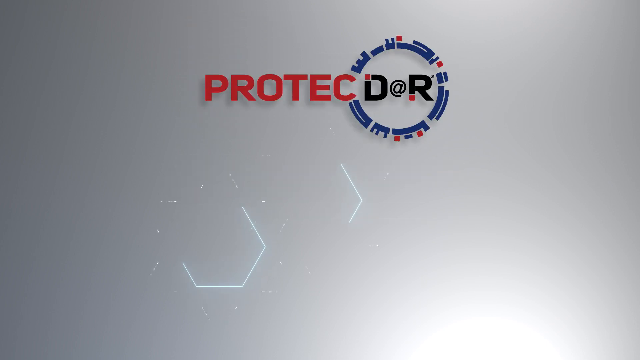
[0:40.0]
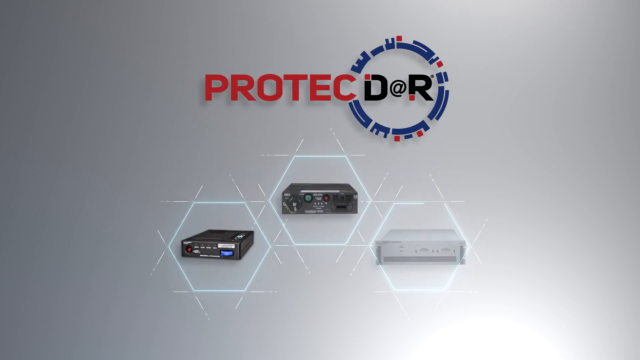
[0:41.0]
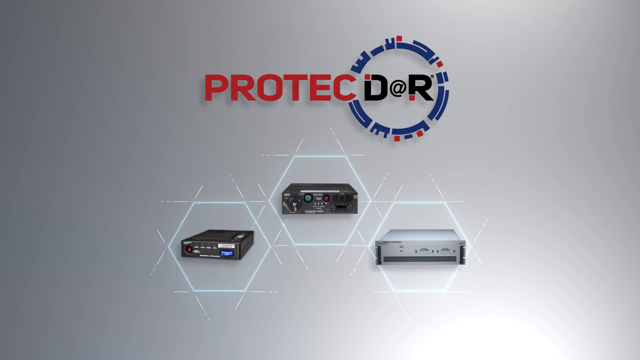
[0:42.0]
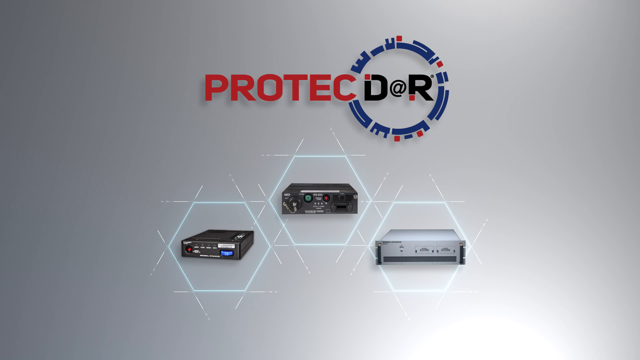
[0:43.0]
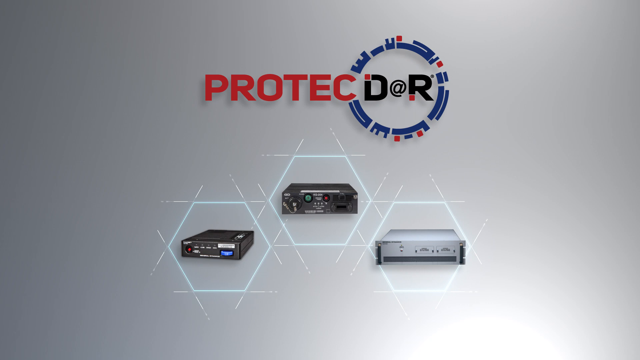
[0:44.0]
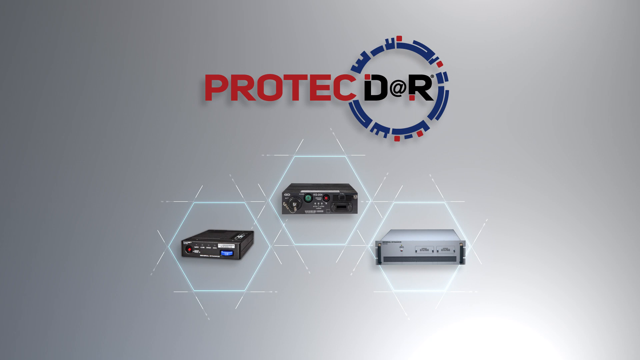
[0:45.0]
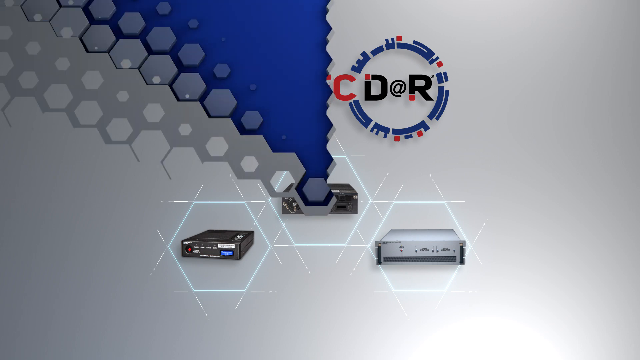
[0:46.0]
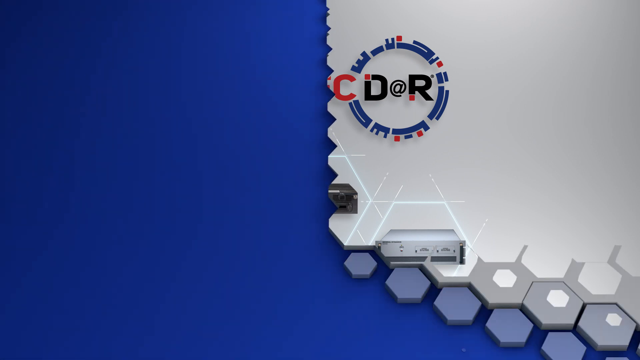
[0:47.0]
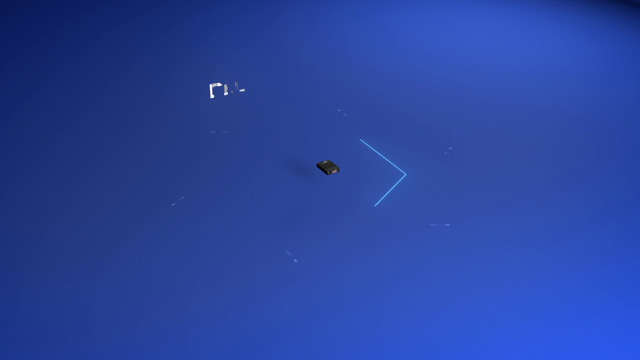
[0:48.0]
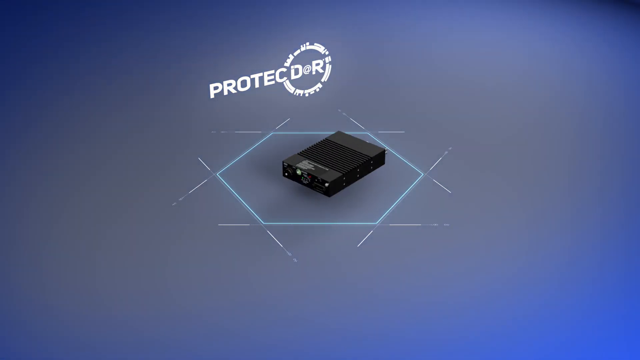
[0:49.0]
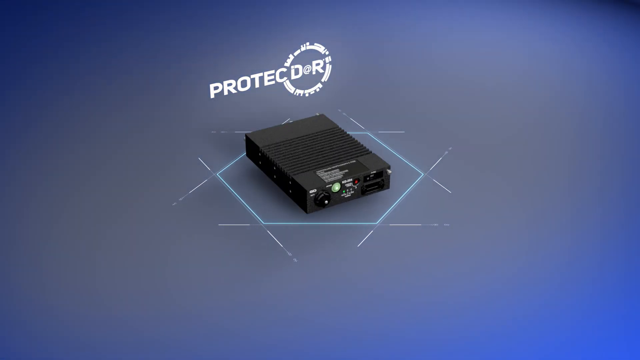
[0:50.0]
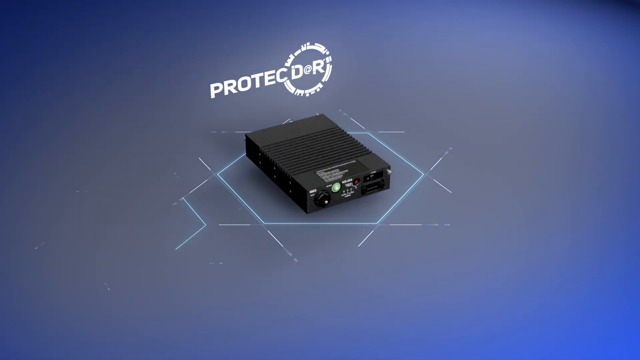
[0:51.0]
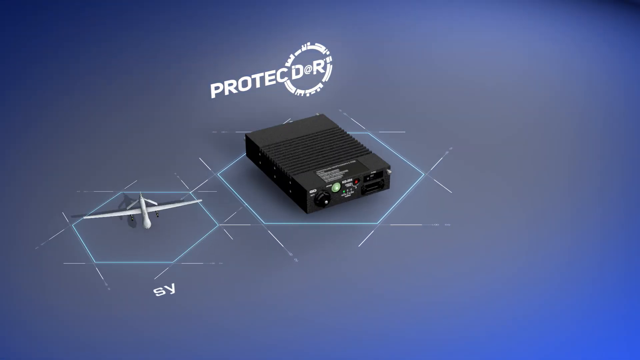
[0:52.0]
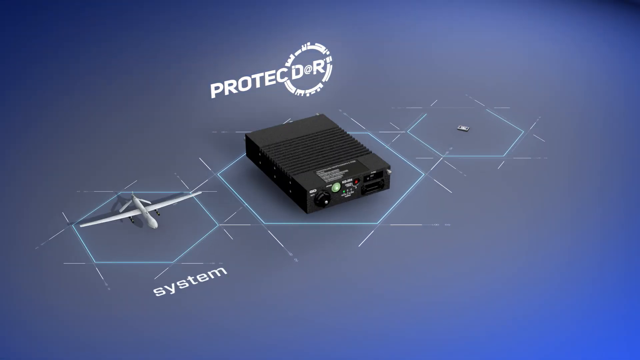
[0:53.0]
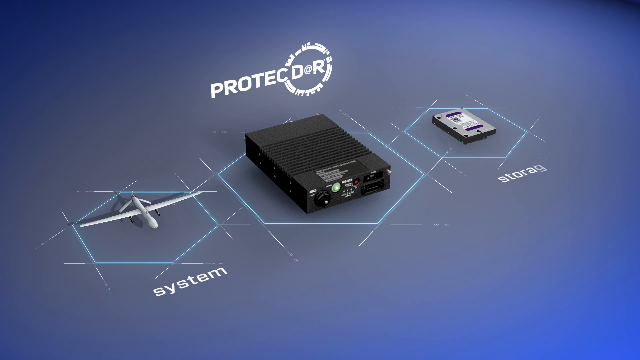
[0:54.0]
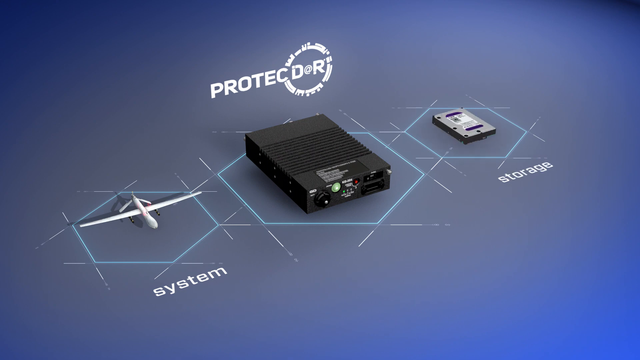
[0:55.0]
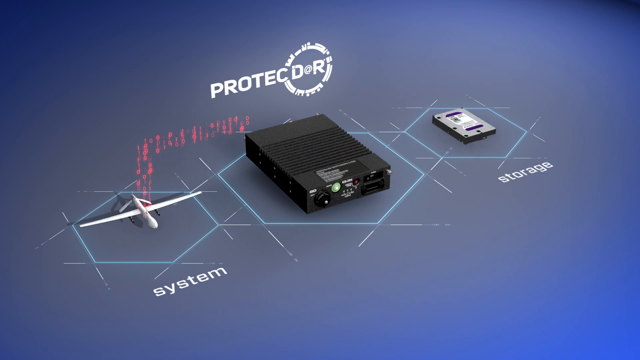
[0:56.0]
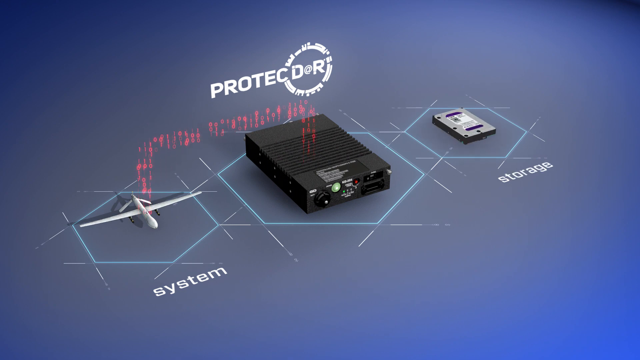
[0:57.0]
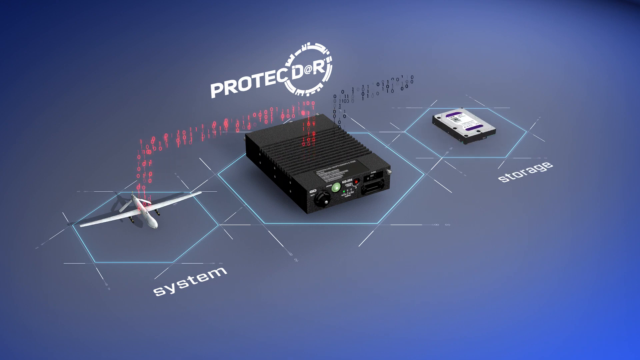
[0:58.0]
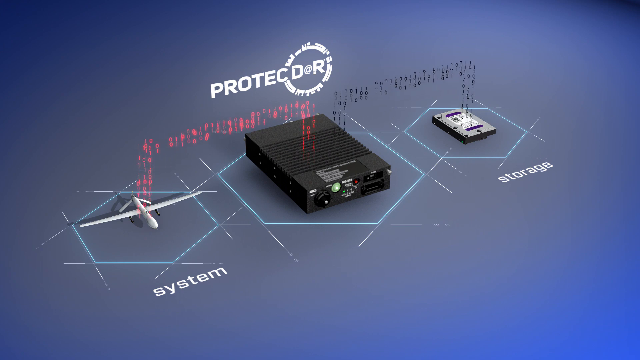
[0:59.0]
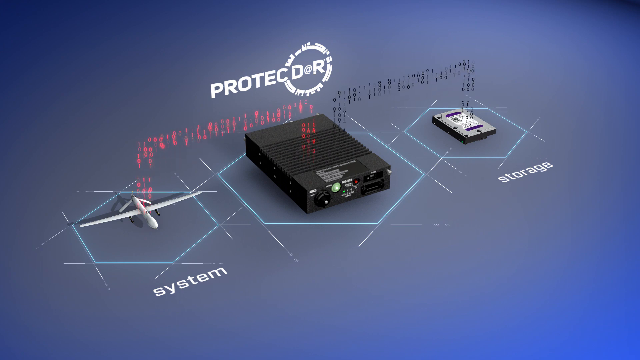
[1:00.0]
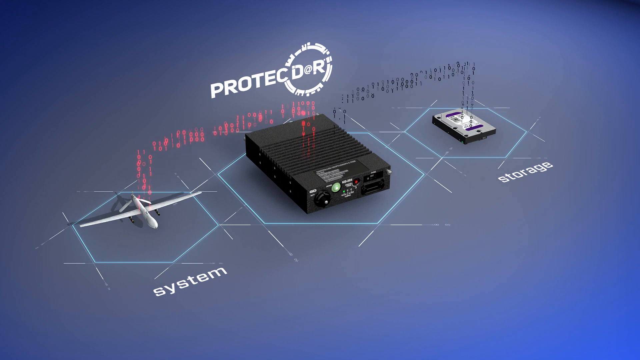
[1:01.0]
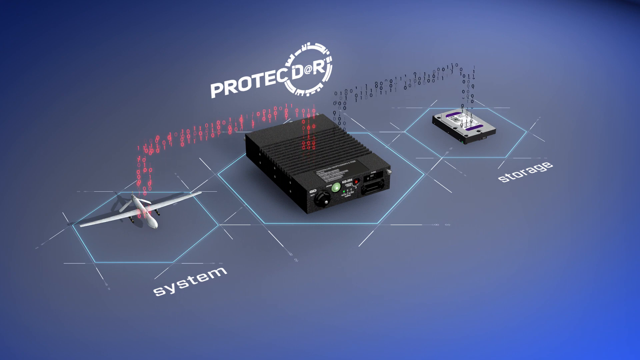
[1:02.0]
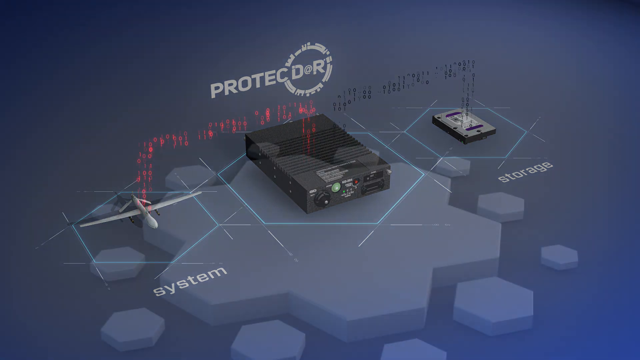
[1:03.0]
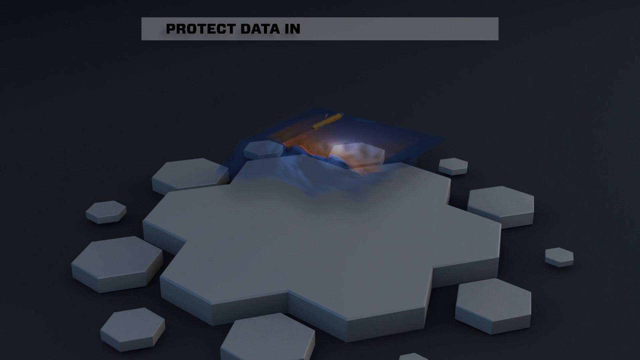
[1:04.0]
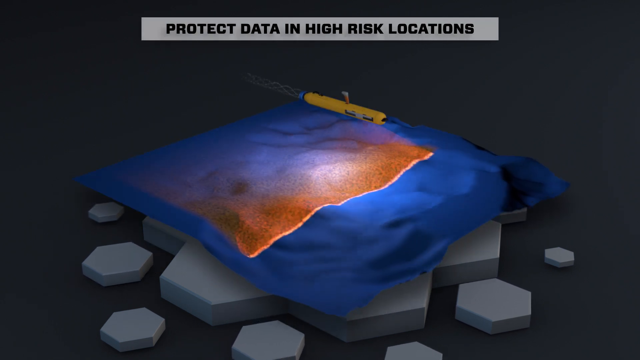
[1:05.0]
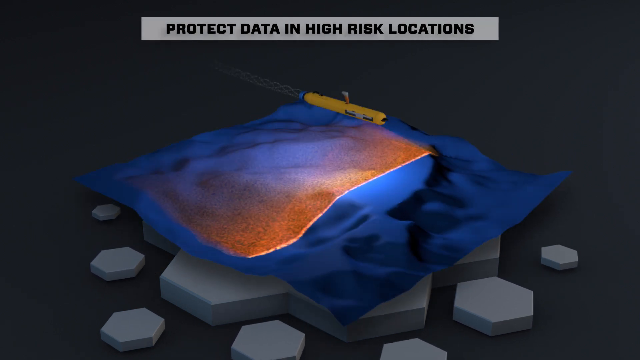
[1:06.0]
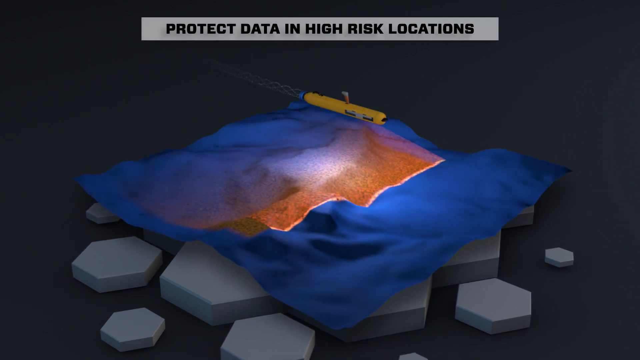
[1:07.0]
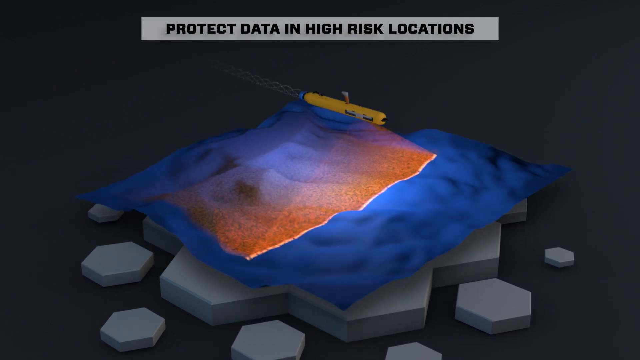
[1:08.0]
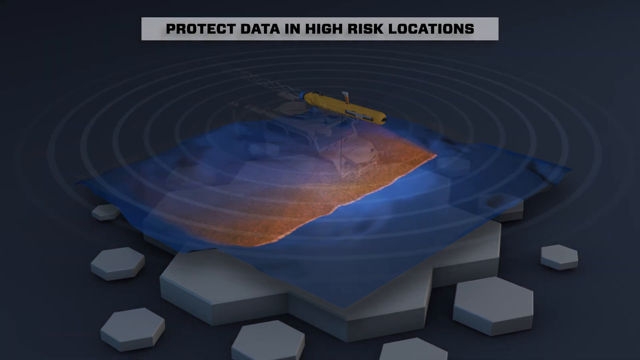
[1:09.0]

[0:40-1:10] The same Protect Door logo is at the top. The "Protect" part is red, and the "Door" part is not spelled D-O-O-R; it is an odd-looking logo, and part of it has a blue circle around it. At the bottom are what look to be three different consoles for tech-related purposes. They look almost like VCRs but with many more buttons, including green, red and black buttons. Next, three devices are shown with two of them labeled, possibly the same devices. The one on the left, which looks like an airplane, is labeled "System," and the one on the right, labeled "Storage," looks like a flat box. Information appears to flow from the System into a very large black Protect Door box and then into the Storage box.